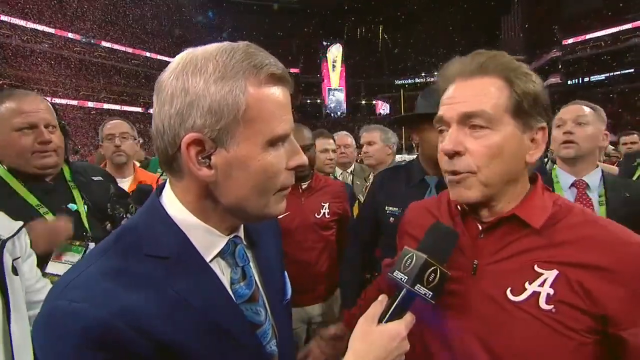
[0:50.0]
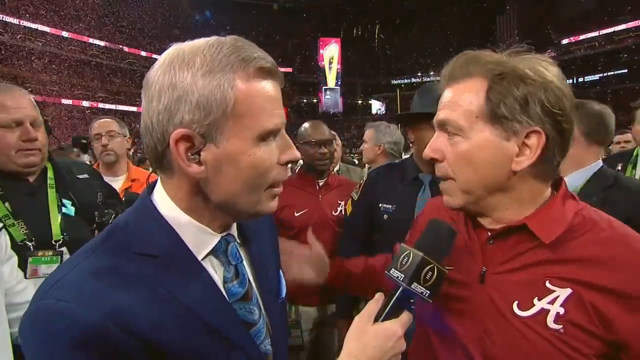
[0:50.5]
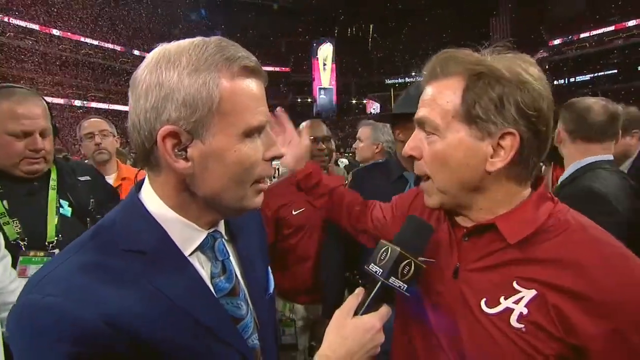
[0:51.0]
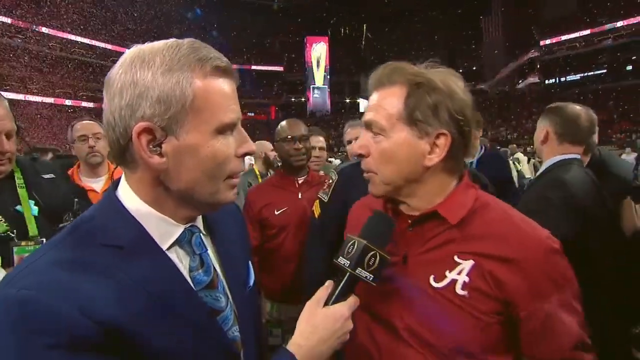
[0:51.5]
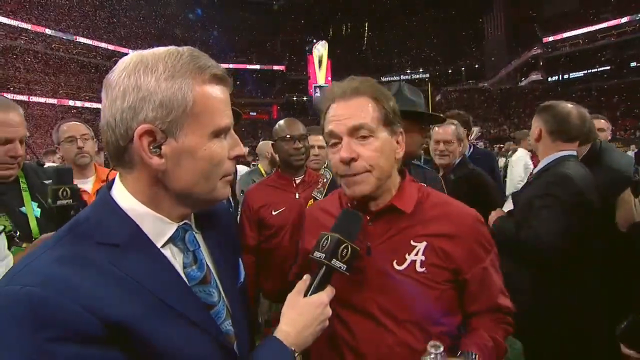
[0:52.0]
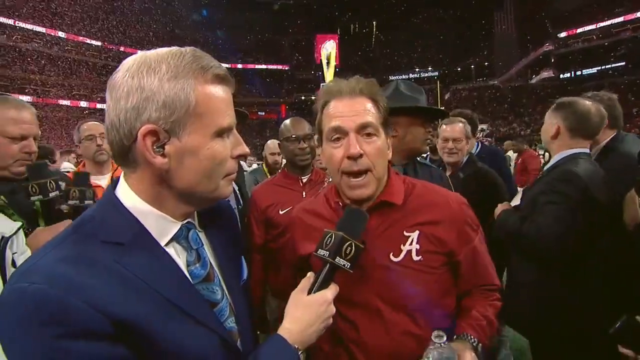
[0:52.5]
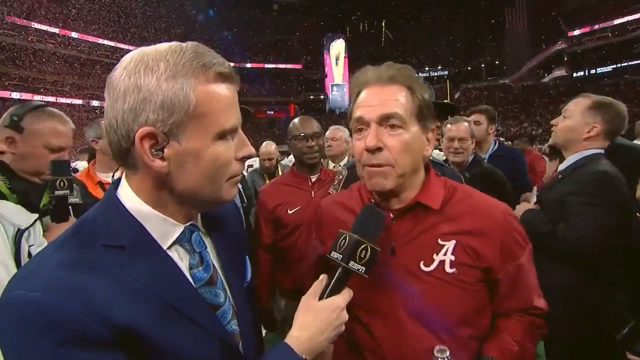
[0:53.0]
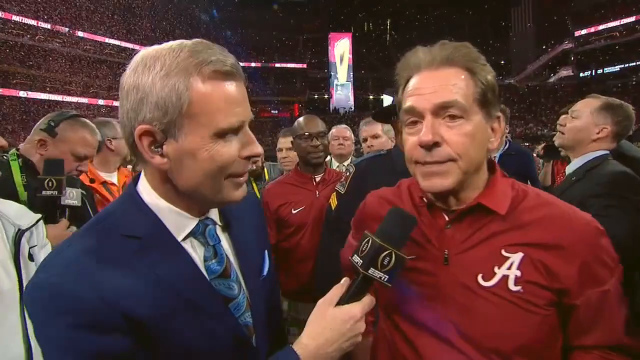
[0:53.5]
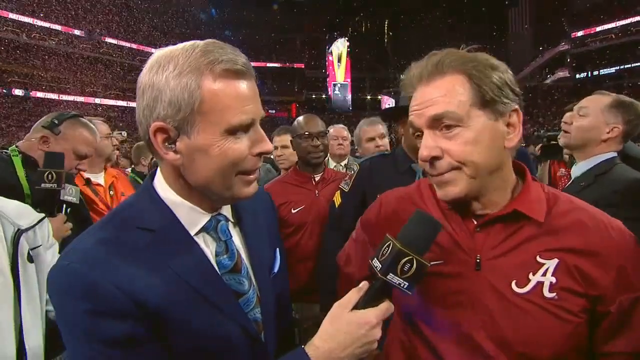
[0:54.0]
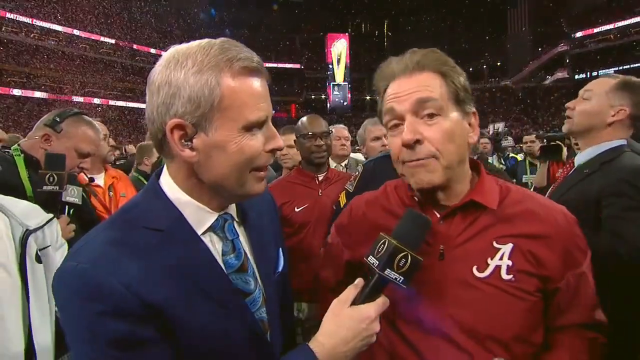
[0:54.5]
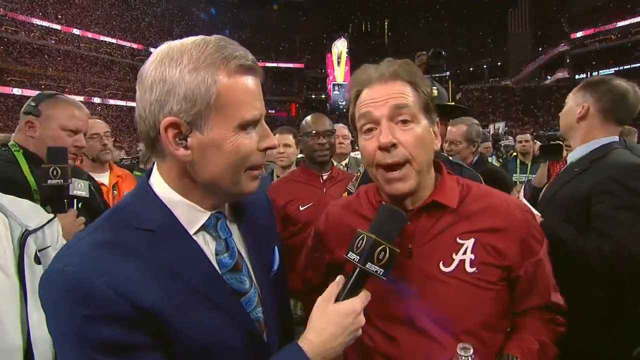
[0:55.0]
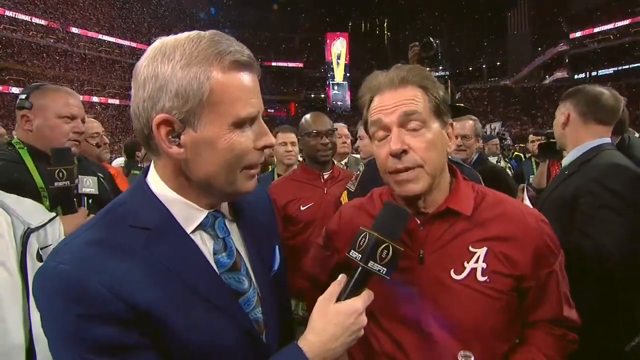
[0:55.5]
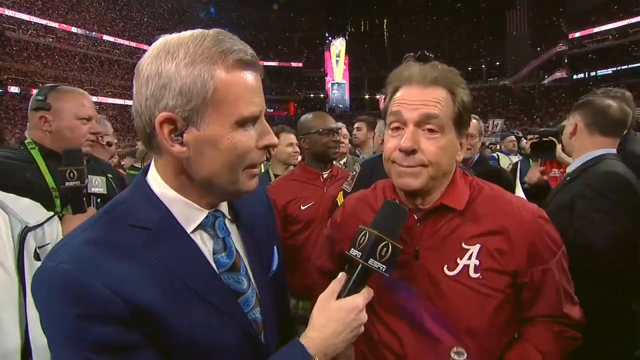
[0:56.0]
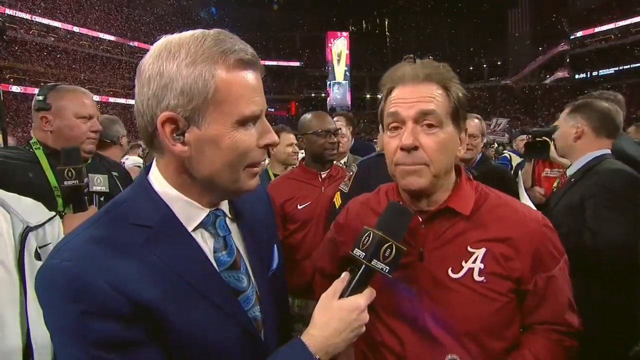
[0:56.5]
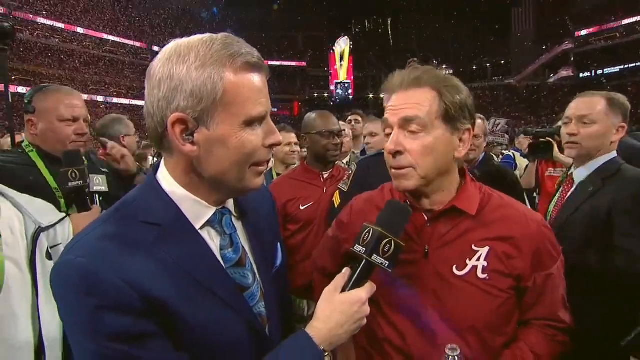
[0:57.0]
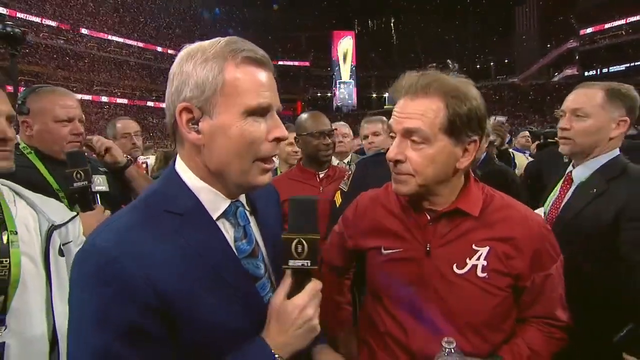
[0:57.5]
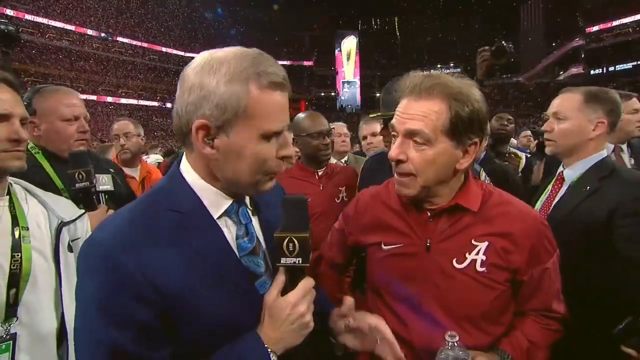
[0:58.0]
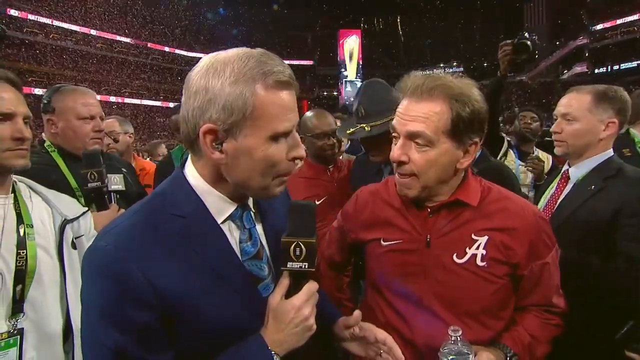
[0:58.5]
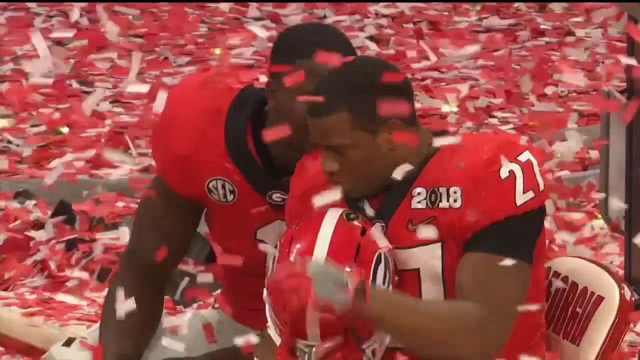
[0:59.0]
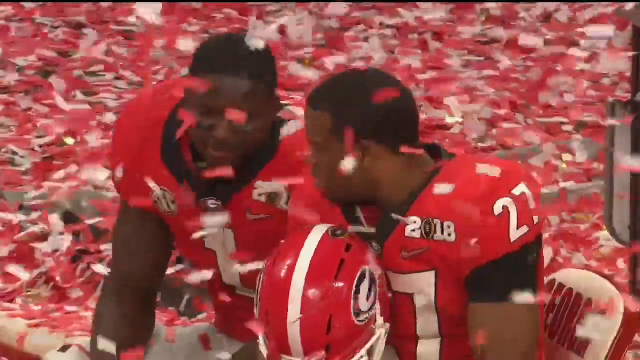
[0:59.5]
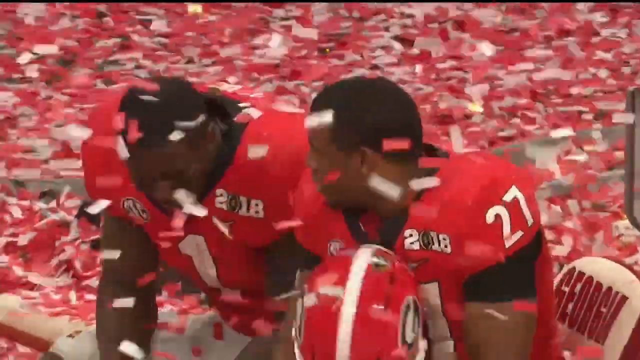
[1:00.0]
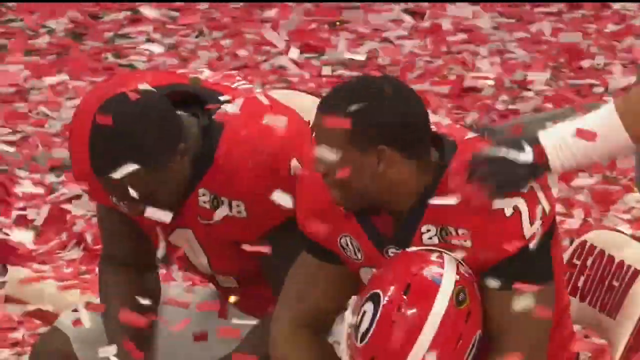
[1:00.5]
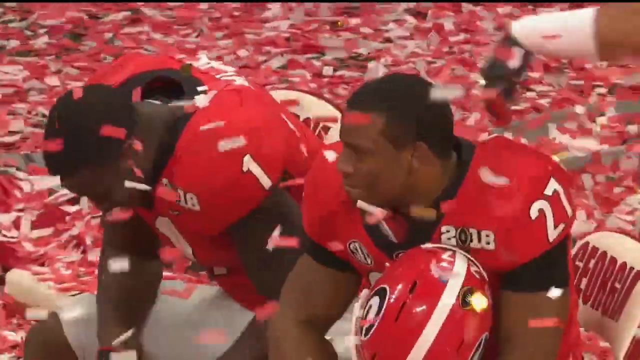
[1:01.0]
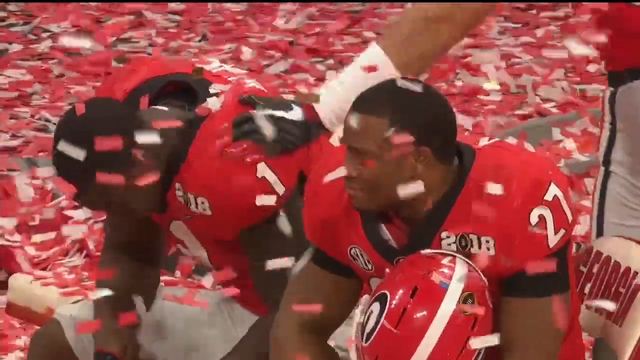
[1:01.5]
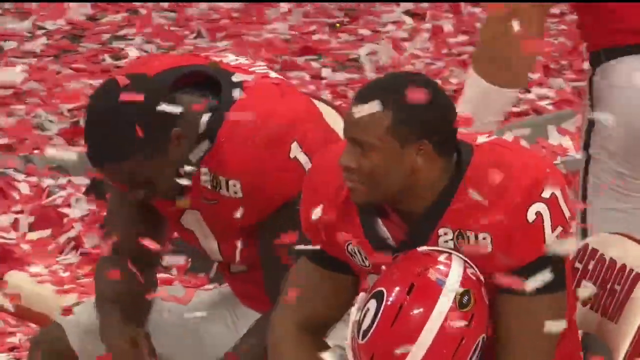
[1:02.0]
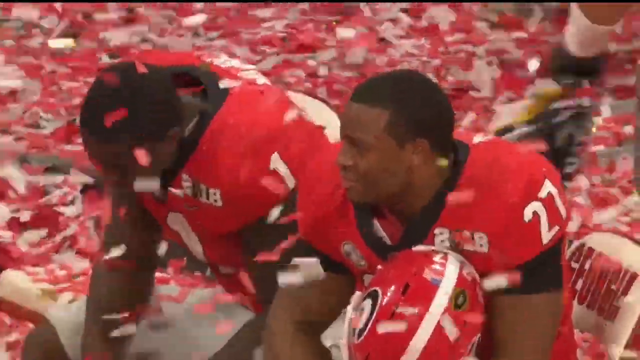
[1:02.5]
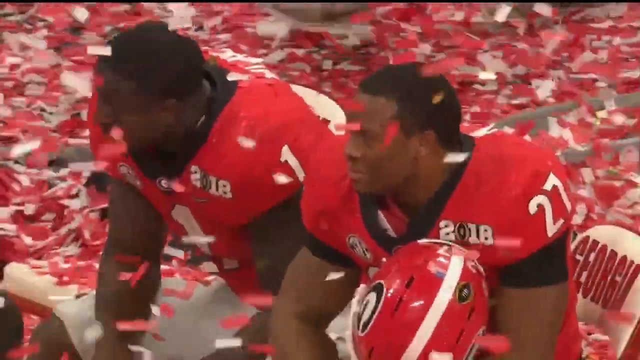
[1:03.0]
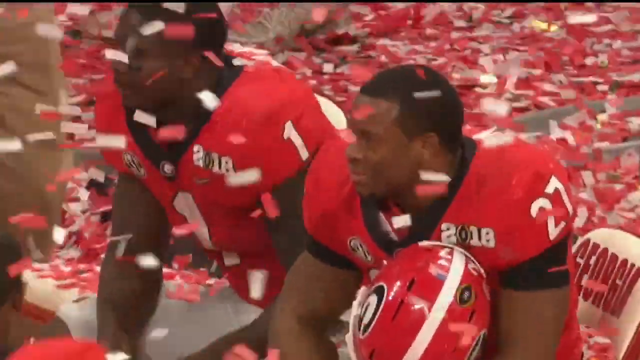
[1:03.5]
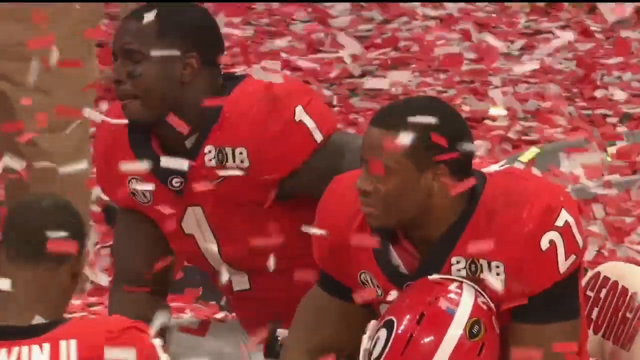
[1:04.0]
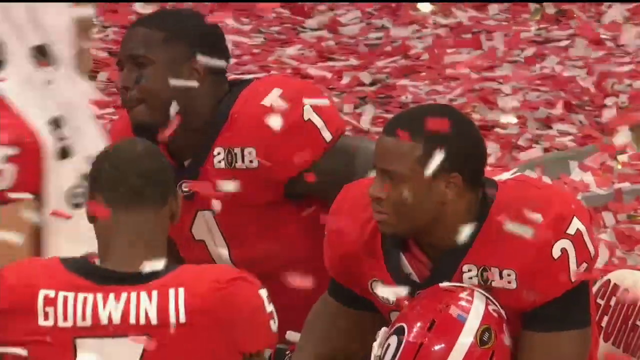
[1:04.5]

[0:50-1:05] The post-game interview with Alabama coach Nick Saban continues, with "2018" shown on the players' jerseys. The video flashes between the coach and the Alabama quarterback, and everyone seems very pleased. Confetti is flying everywhere. There are glimpses of Georgia players, who look disappointed. Many people are in the background, including videography staff, commentating staff, other players and some security, but only the Alabama coach and quarterback are interviewed. It is dark outside, and the field lights illuminate the people. The scene stays on the football field.